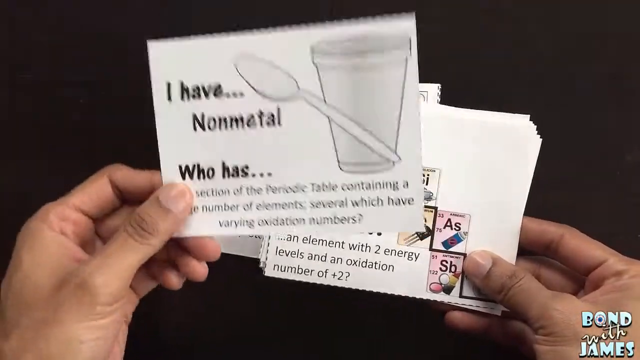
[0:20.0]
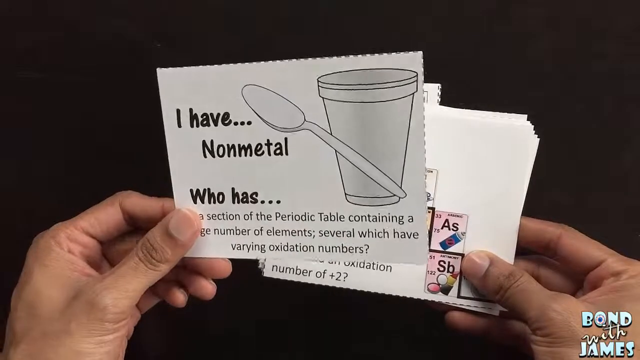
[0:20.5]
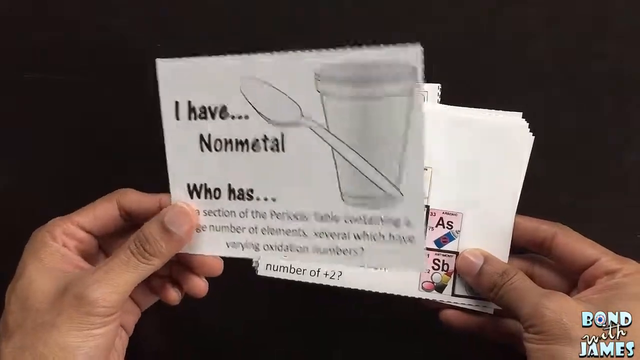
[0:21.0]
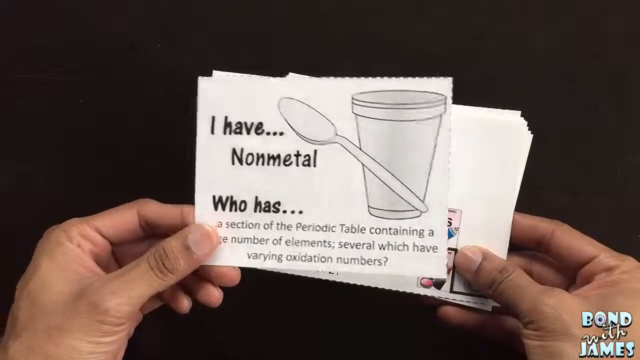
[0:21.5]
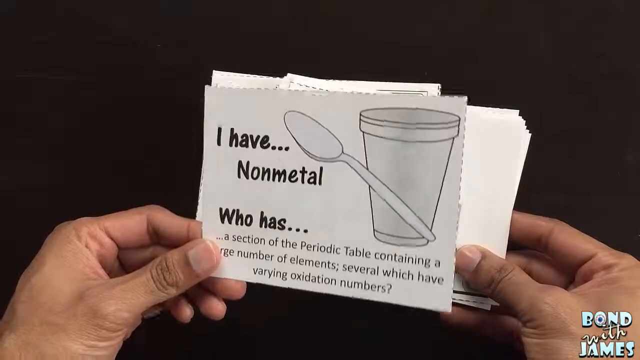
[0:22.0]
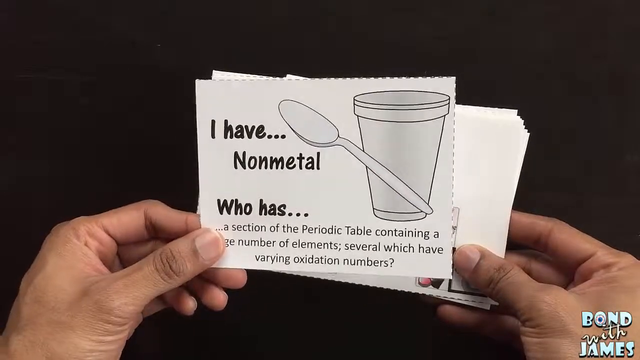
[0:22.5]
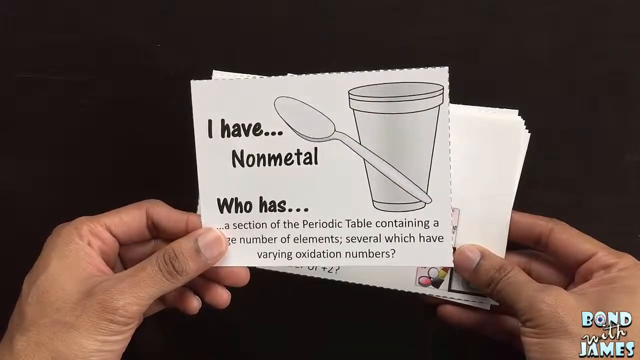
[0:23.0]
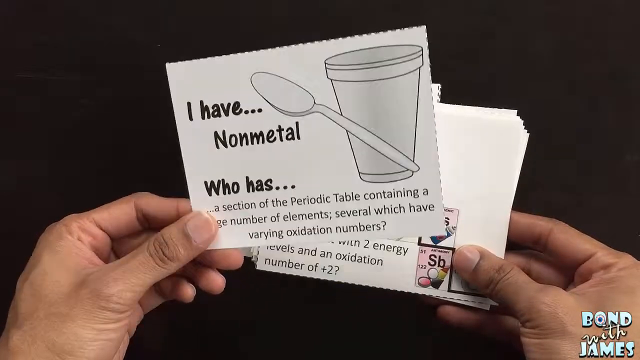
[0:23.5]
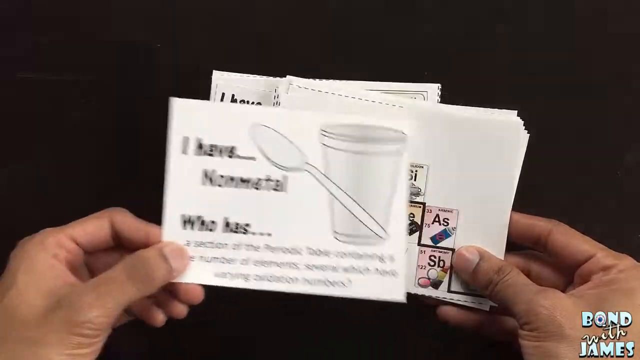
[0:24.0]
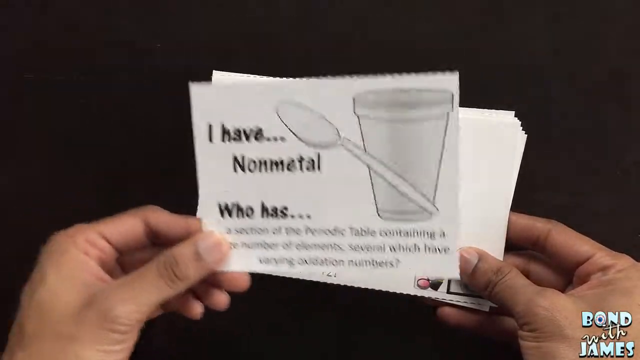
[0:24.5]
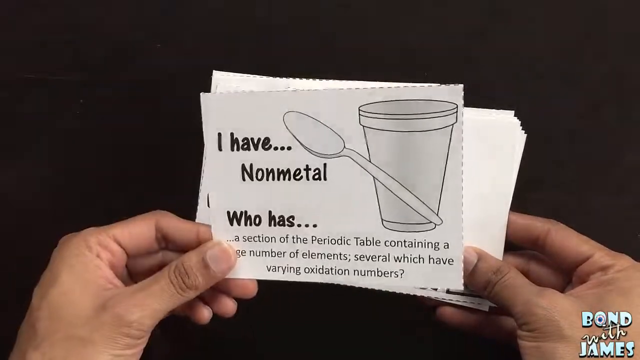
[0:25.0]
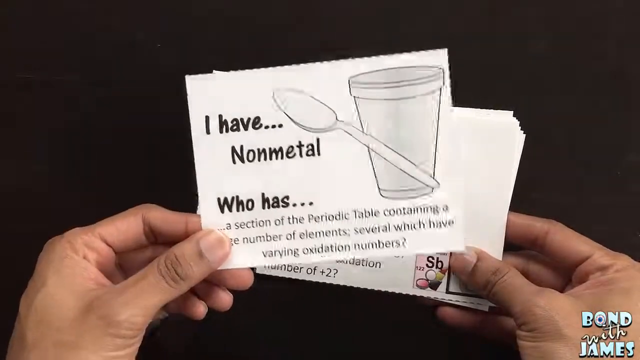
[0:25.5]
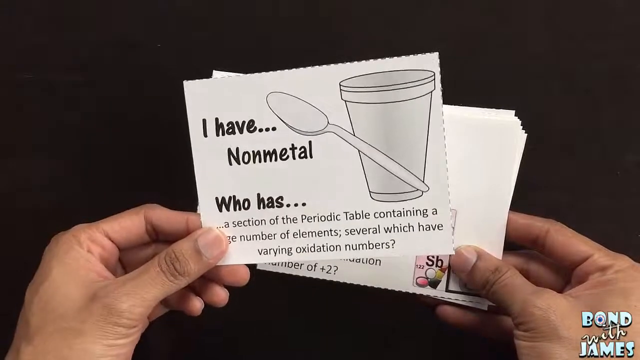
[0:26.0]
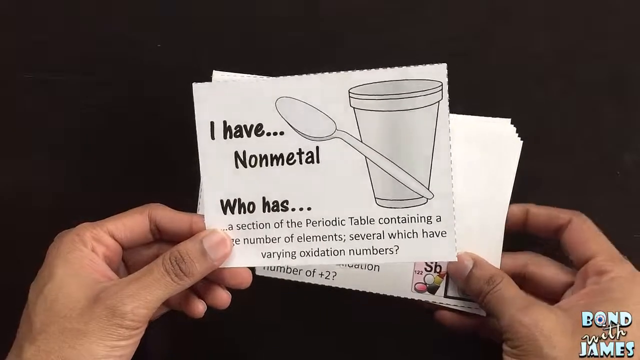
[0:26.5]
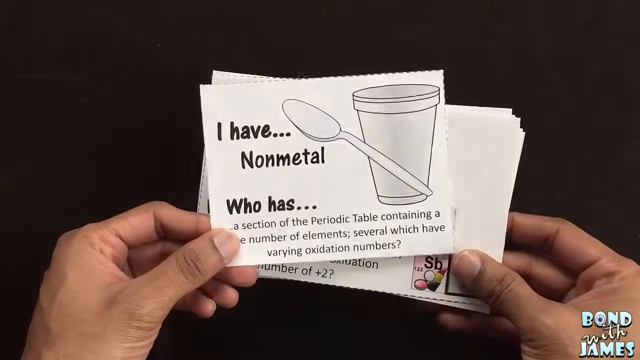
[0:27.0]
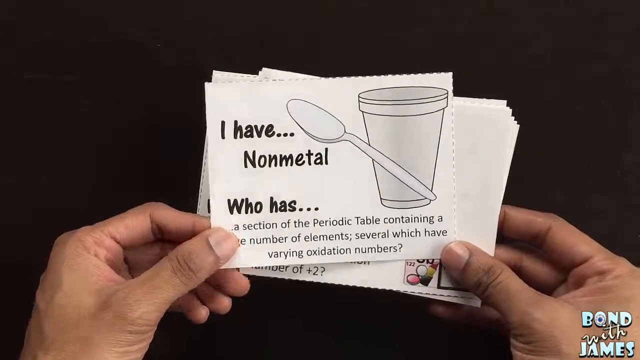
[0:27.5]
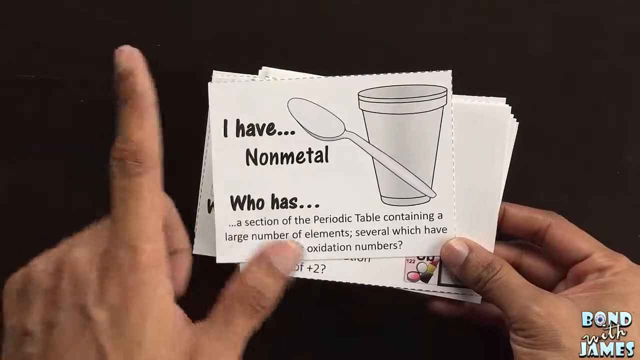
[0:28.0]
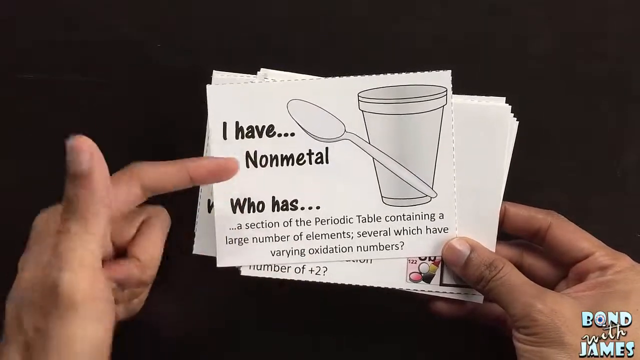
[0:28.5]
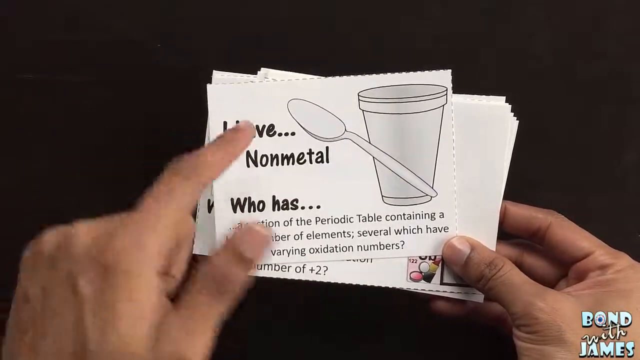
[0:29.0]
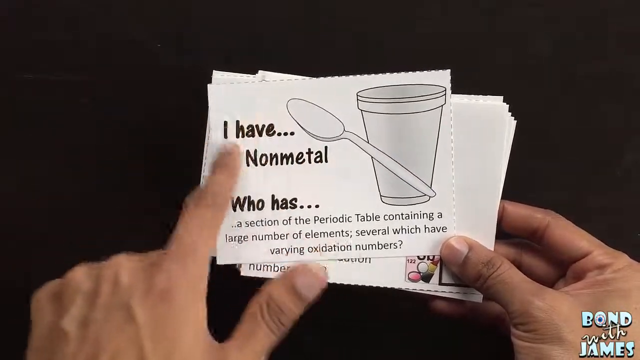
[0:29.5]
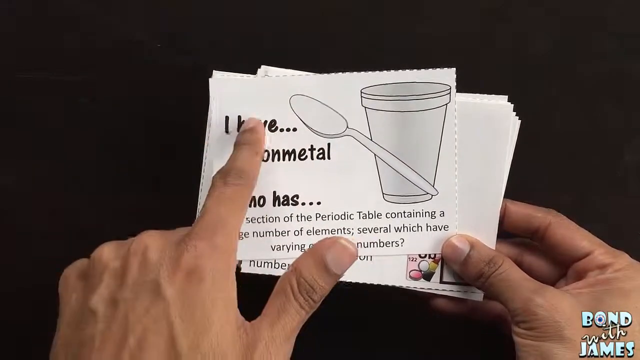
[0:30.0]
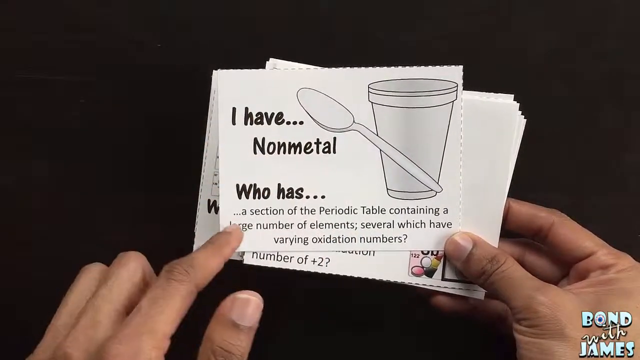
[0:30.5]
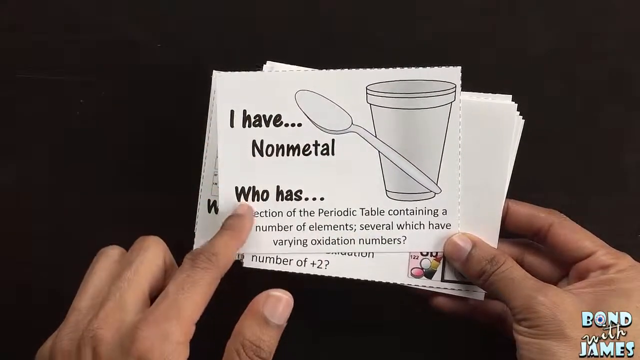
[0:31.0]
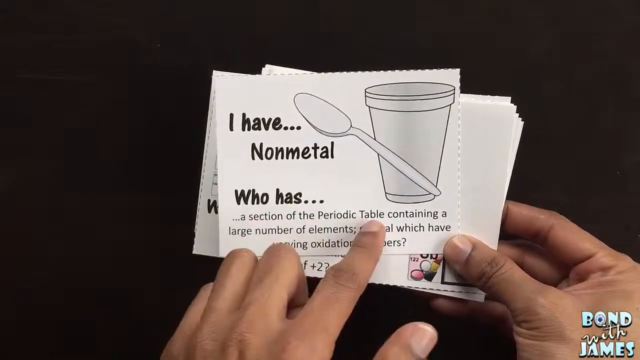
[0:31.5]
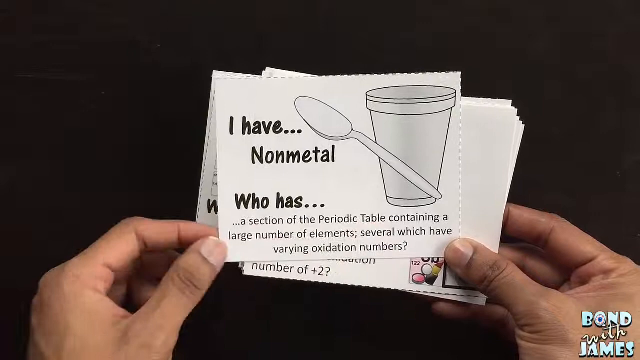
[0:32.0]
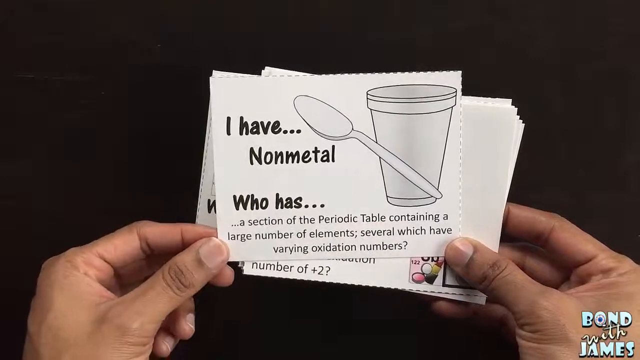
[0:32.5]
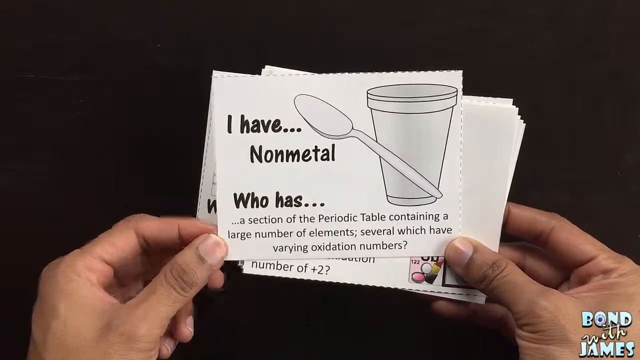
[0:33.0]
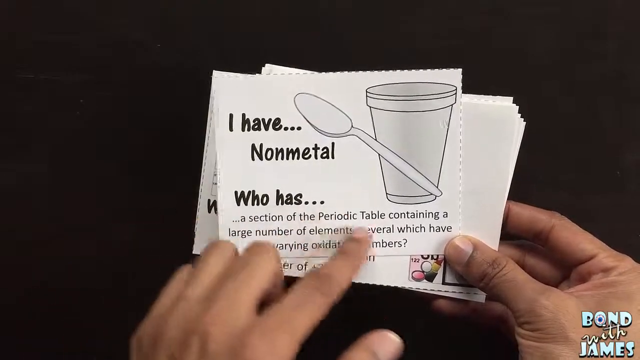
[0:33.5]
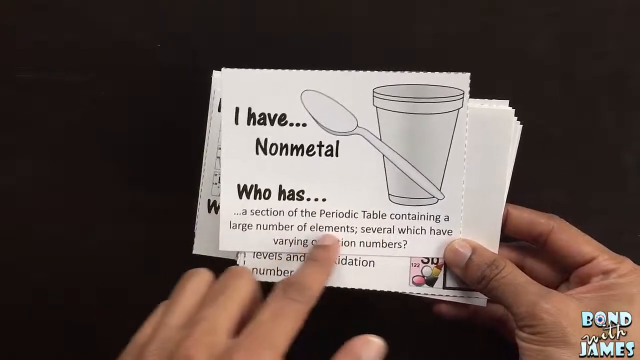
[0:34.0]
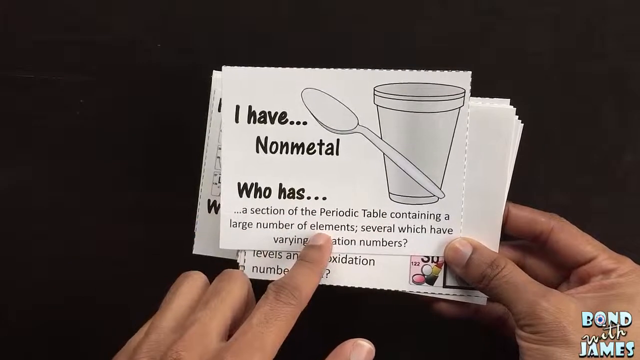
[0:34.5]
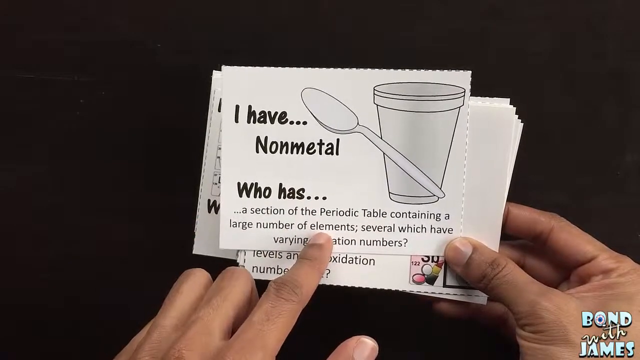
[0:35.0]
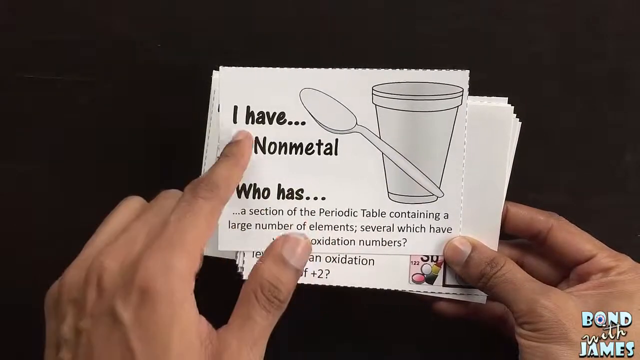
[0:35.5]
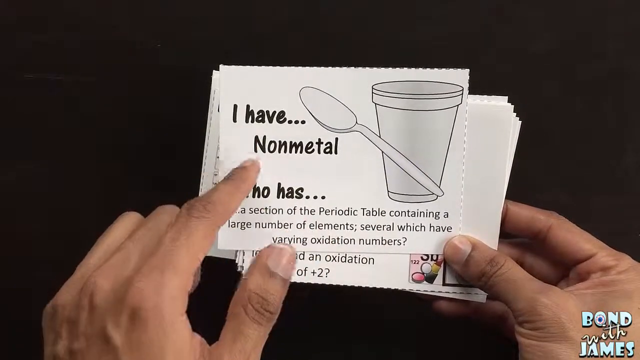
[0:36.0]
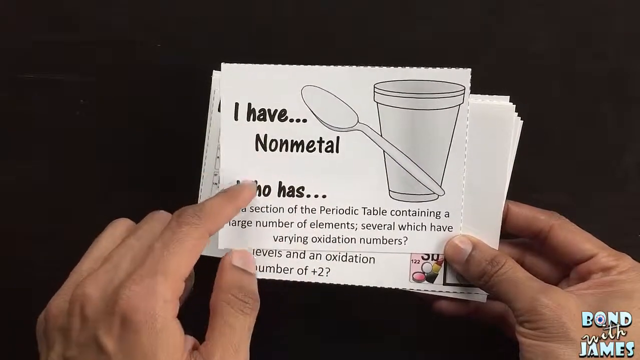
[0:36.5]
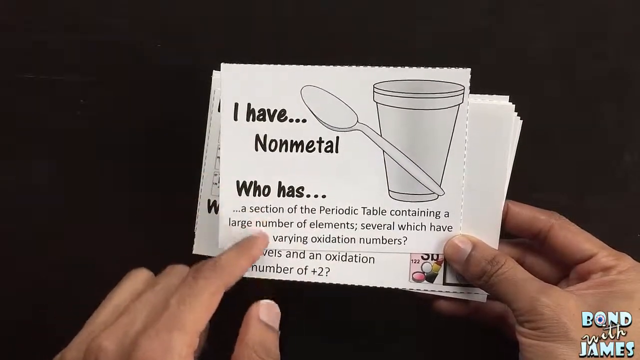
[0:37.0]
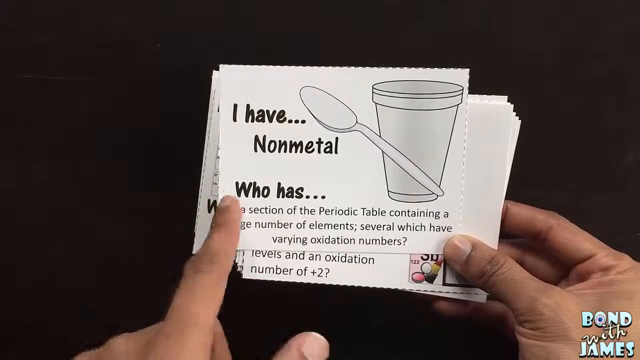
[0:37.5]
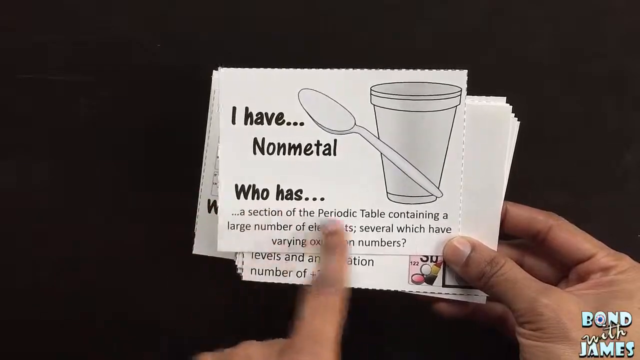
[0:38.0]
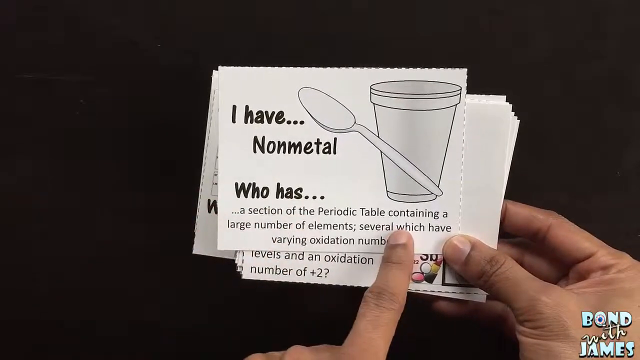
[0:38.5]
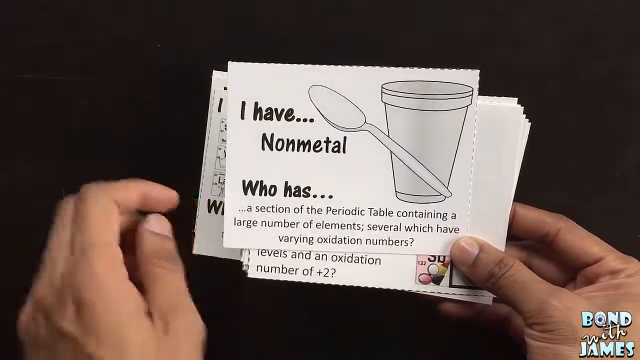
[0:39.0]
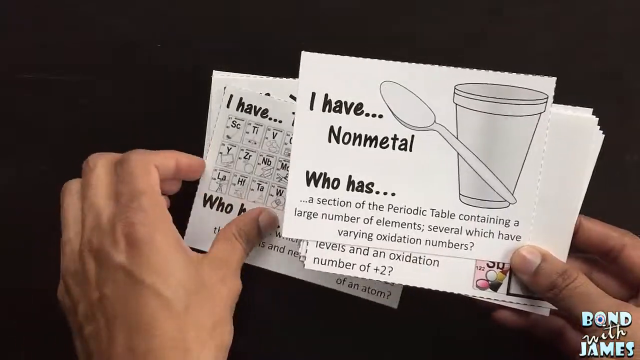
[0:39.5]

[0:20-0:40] Two hands hold multiple white cue cards stacked on top of each other. The first card reads "I have...non-metal. Who has...section of the periodic table containing the number of elements; several which have varying oxidation numbers?" A black-and-white drawing of a spoon and a cup is on its right side. The person wiggles the card several times and points at the text with his left index finger. The hand then reaches for a separate cue card on the table, which seems to have many elements of the periodic table on it, picks it up with the left hand, and puts it over the previous card. The overhead shot has a dark wooden table in the background.